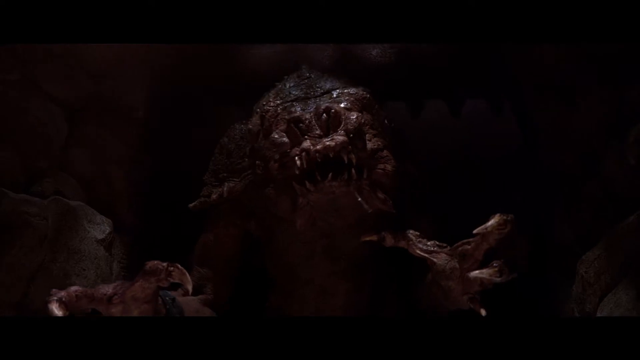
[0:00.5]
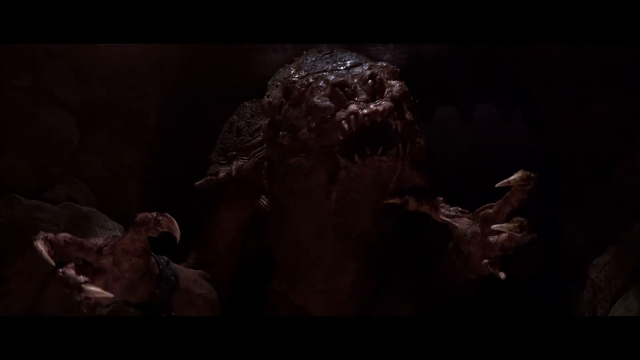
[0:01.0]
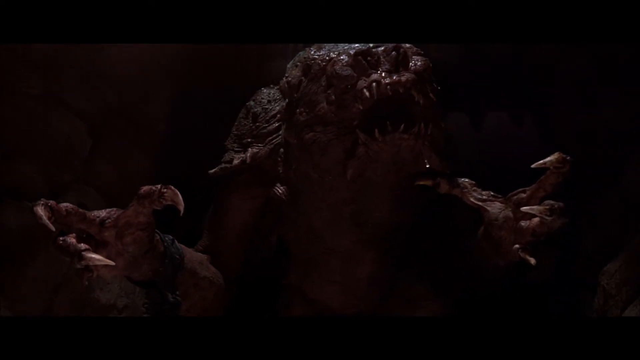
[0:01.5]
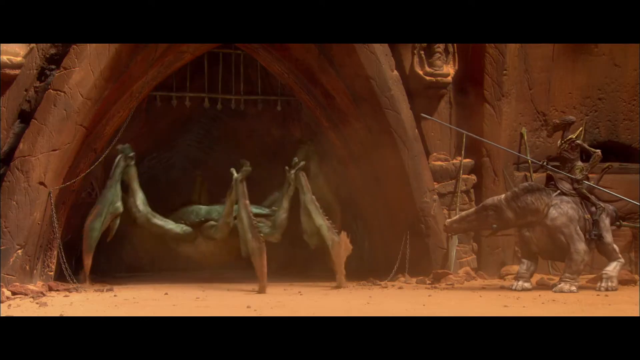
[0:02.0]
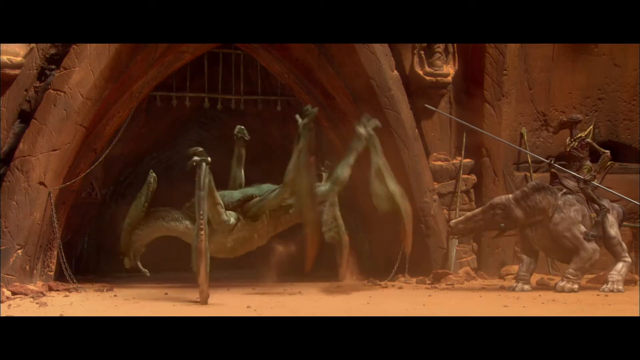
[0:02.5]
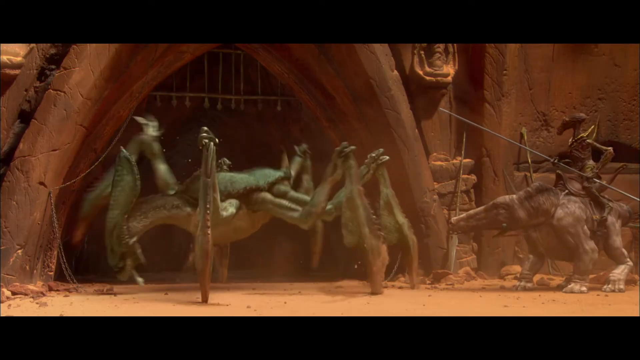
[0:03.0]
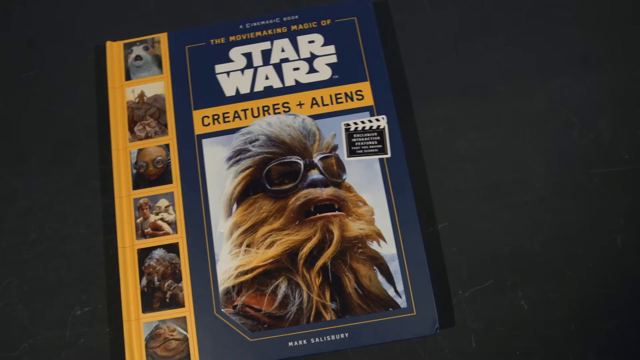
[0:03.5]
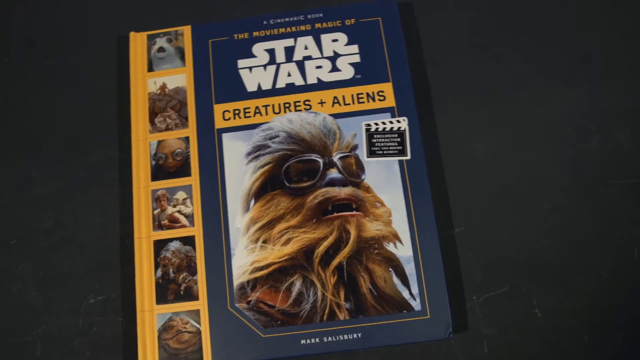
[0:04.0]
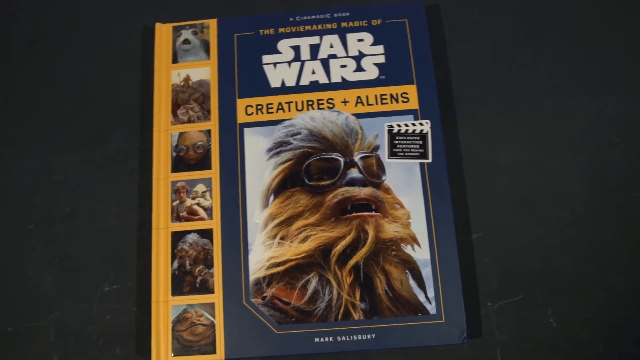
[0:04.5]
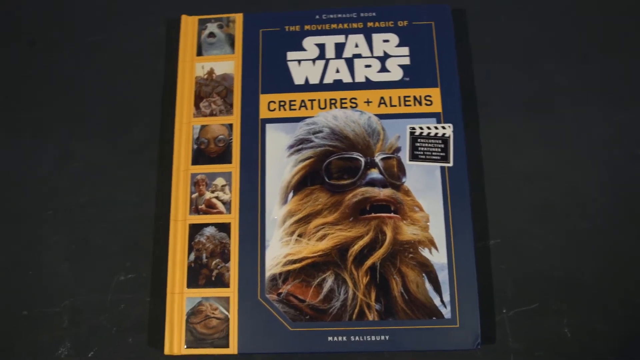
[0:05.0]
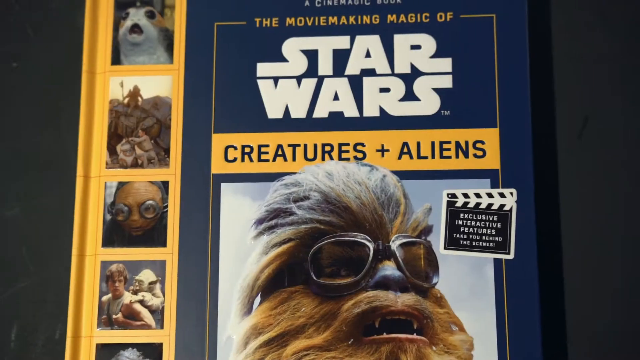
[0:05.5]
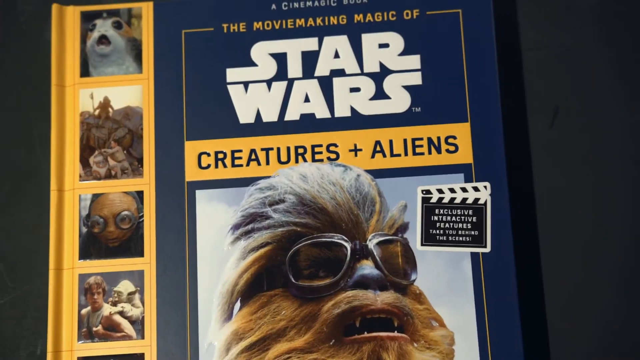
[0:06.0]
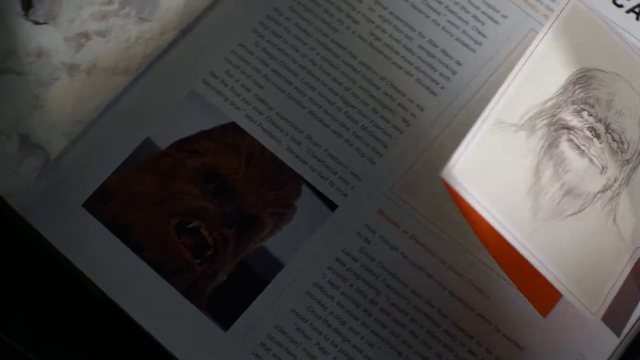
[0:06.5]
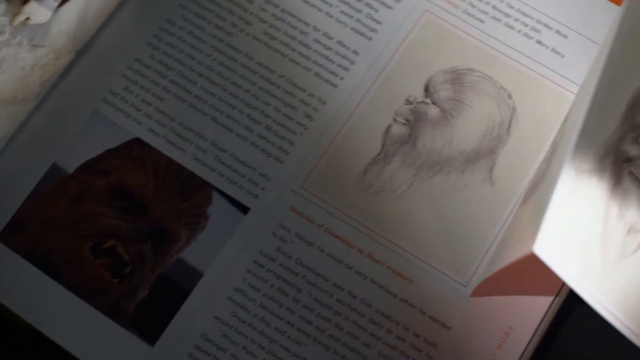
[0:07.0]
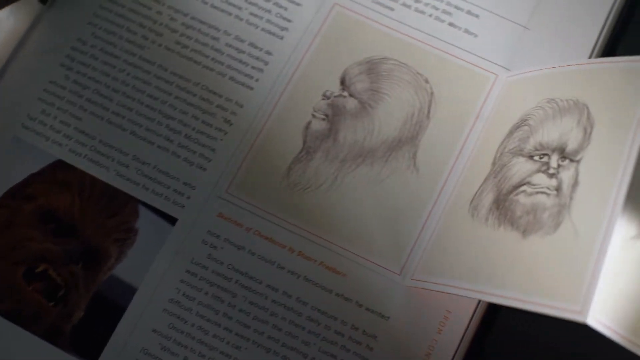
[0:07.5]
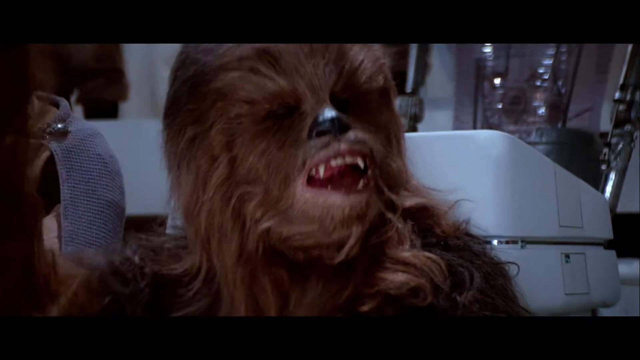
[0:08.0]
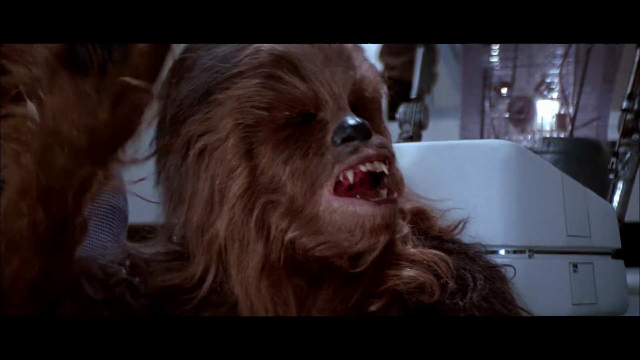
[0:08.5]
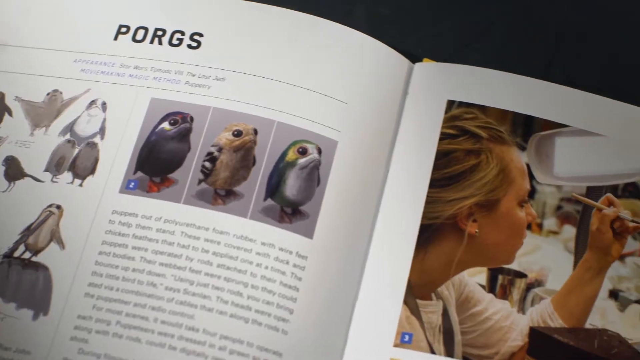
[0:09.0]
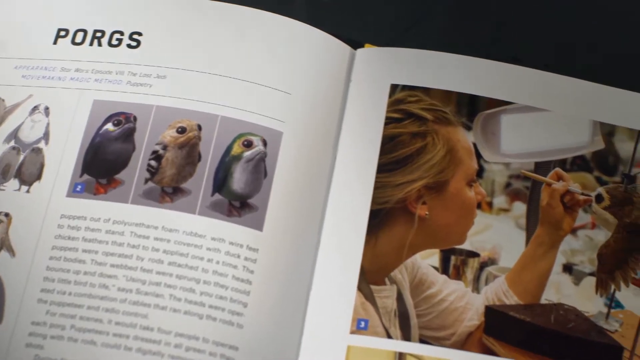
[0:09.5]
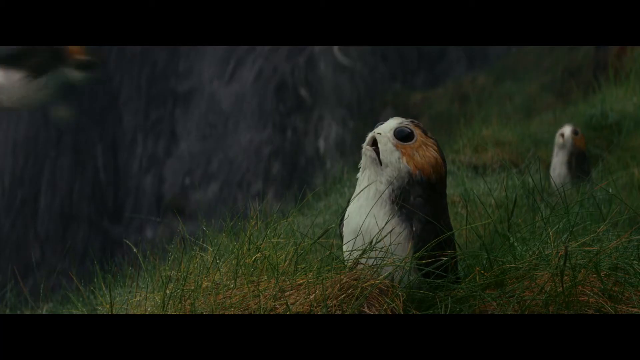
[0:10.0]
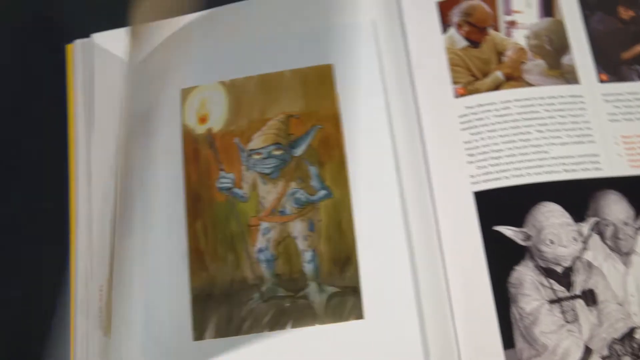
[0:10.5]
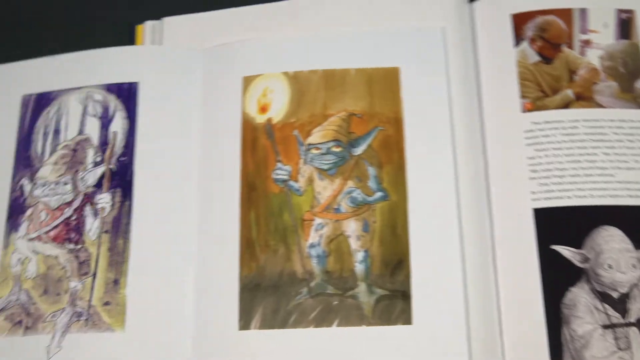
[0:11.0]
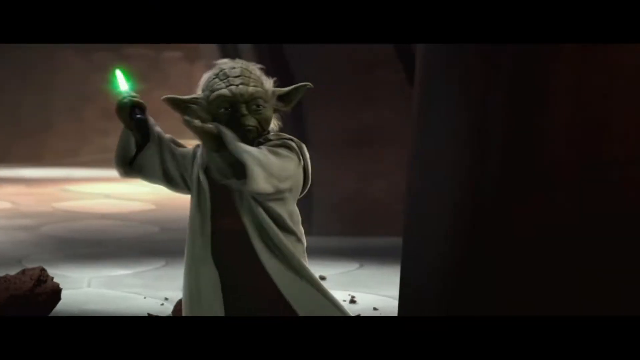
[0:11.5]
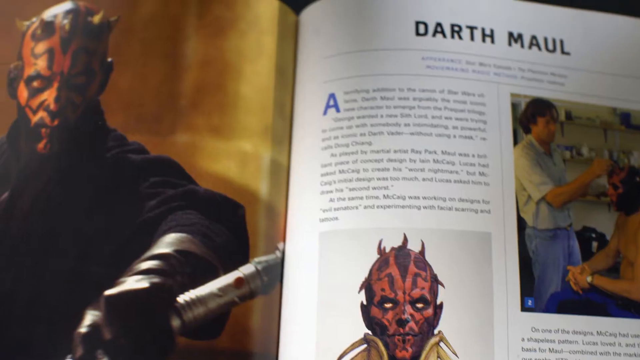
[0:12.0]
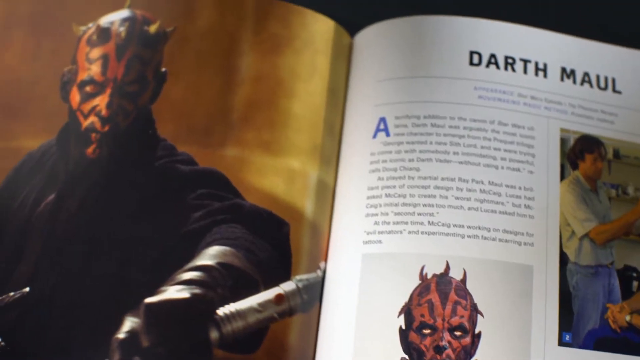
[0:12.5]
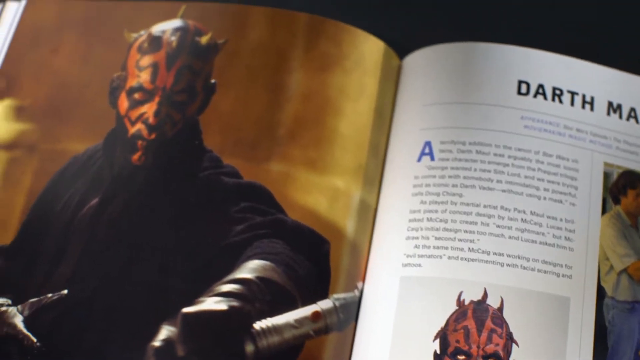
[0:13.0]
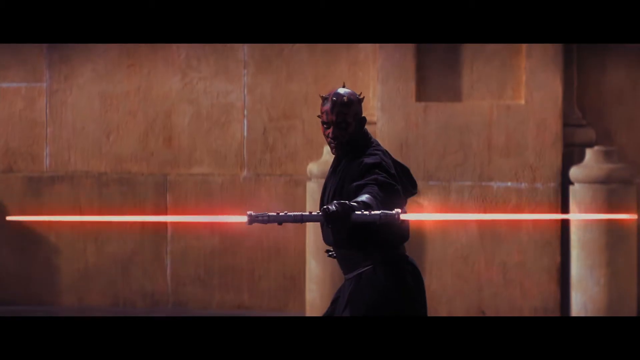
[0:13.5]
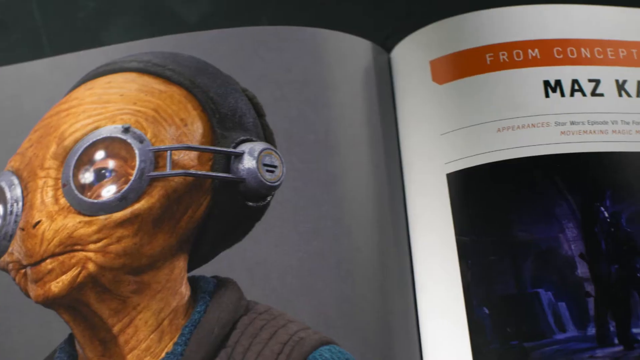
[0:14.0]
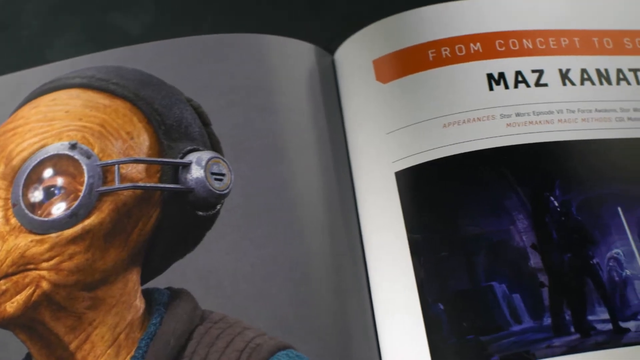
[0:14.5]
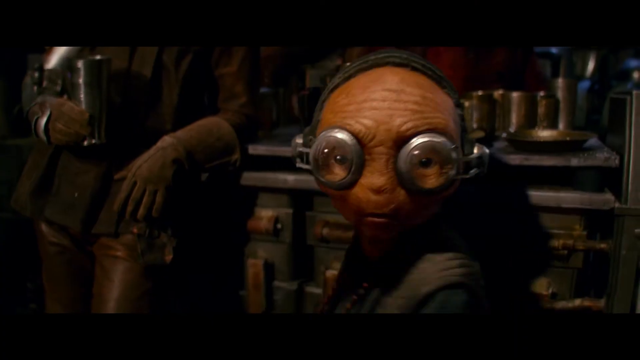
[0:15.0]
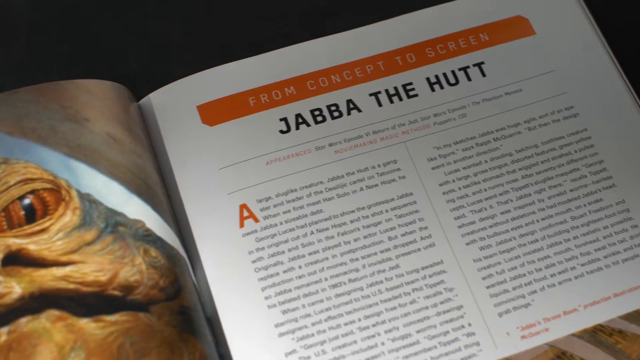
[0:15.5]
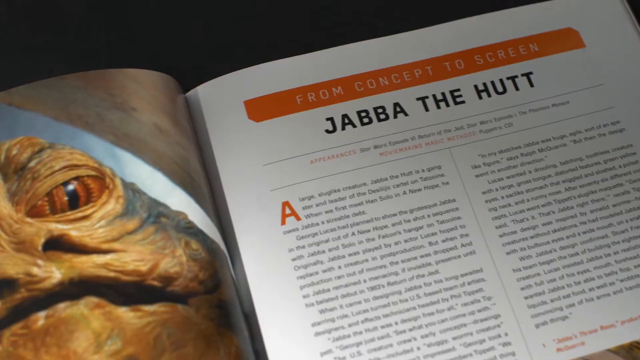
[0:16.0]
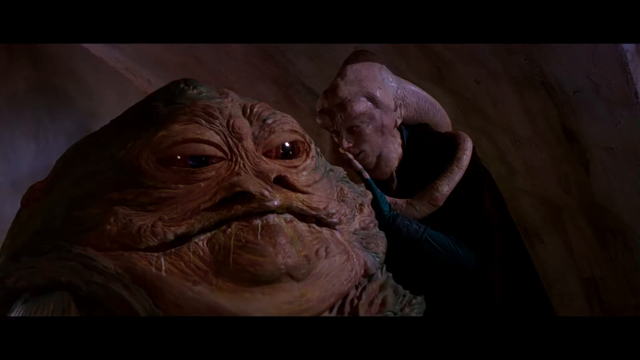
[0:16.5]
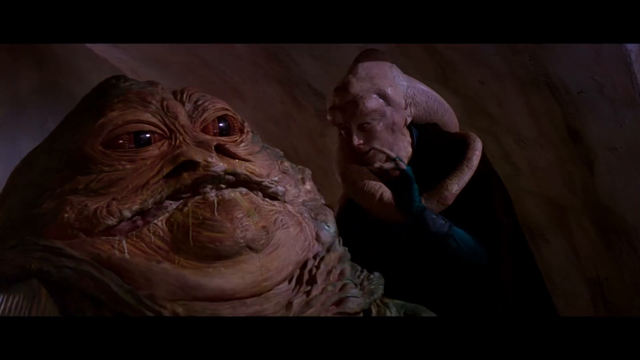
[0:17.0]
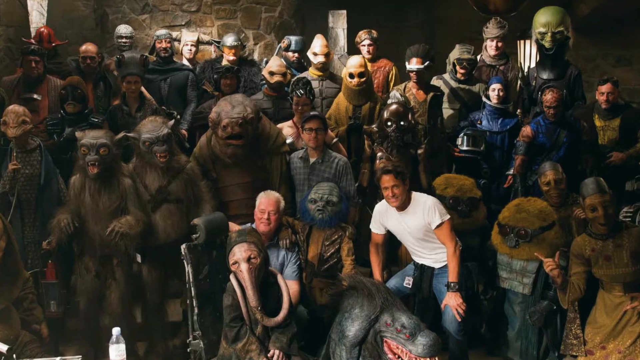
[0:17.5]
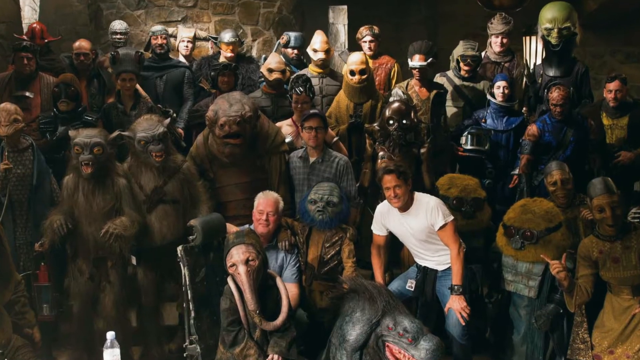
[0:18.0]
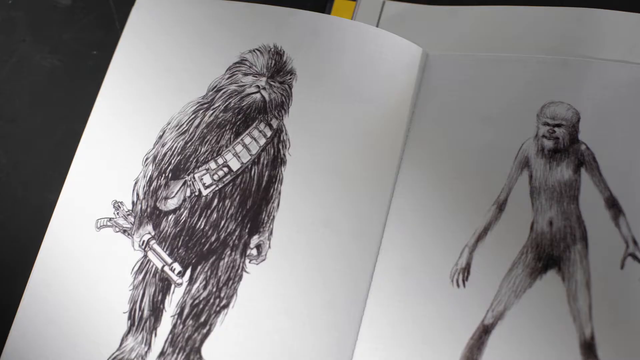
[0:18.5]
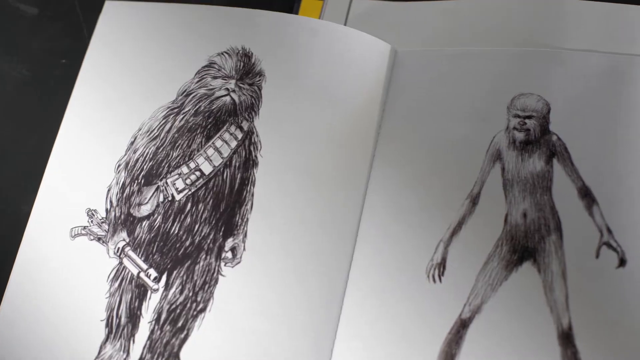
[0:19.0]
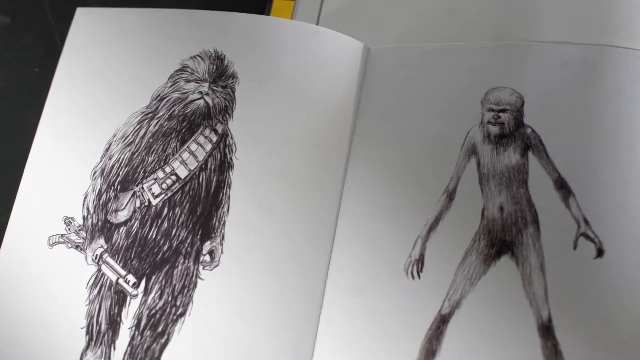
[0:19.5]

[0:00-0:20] The video opens with a very creepy character that looks like a monster. It then shows a scene from the Star Wars Clone Wars, where a giant spider-like, crab-like creature with very sharp claws comes out of a cave. A guard that looks like an insect rides a different beast, holding on to some sort of spear. Next comes a book whose front reads "Star Wars Creatures plus Aliens", with Chewbacca at the front of the cover. Pictures follow of Chewbacca, a Porg, a Yoda-like character, a Darth Maul character, a masked character, and then Jabba the Hutt. A picture shows a group of people all dressed in Star Wars alien-like costumes, and then two sketches of Chewbacca appear.